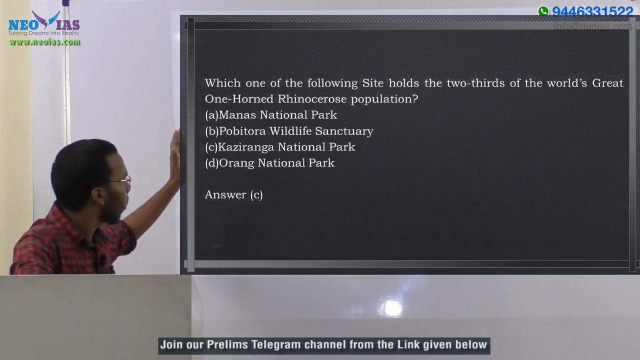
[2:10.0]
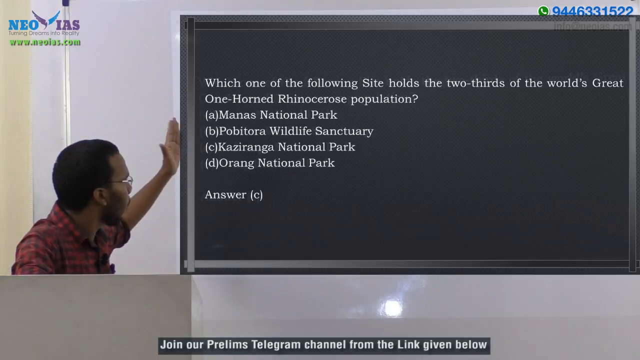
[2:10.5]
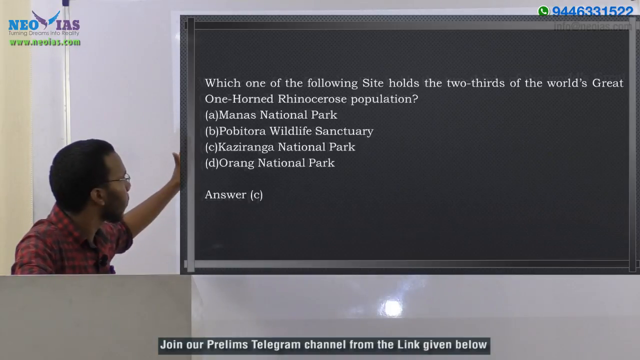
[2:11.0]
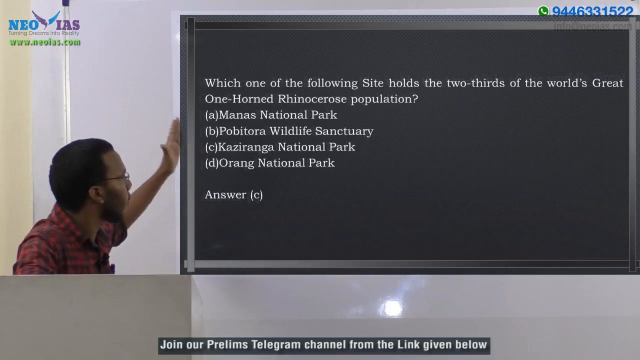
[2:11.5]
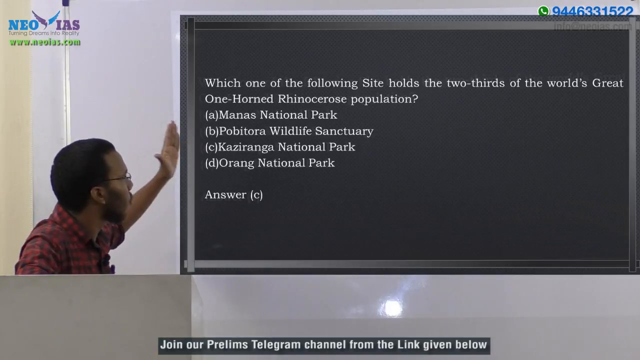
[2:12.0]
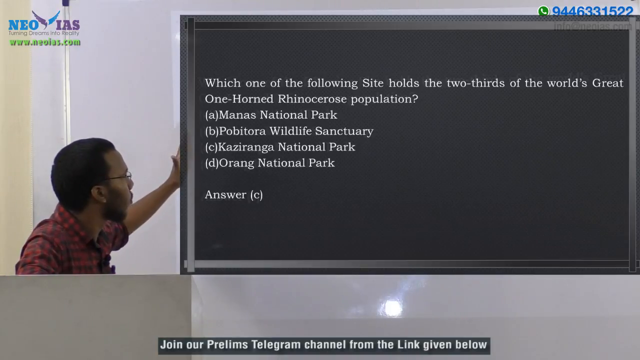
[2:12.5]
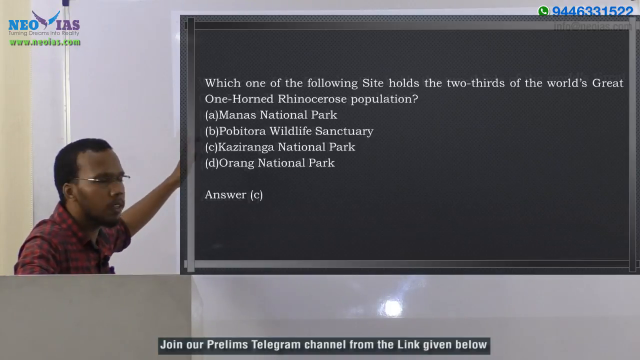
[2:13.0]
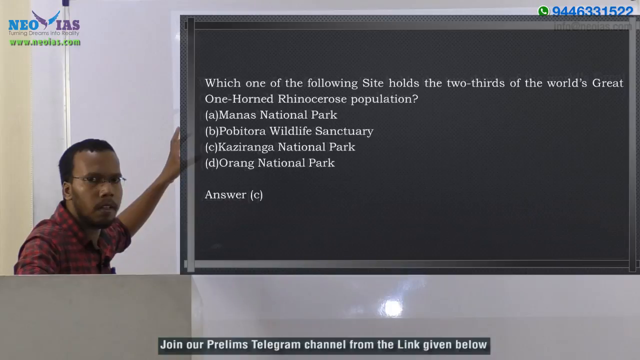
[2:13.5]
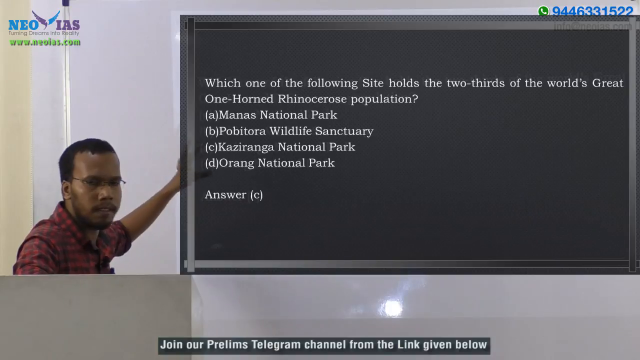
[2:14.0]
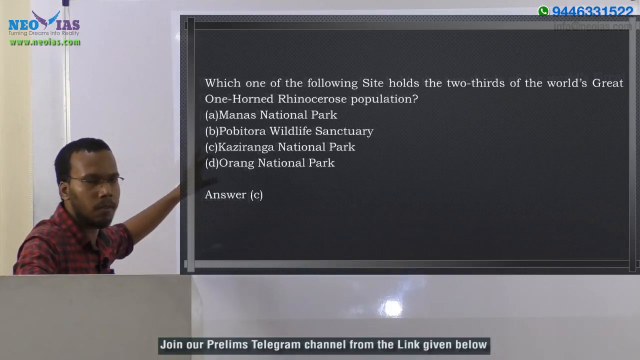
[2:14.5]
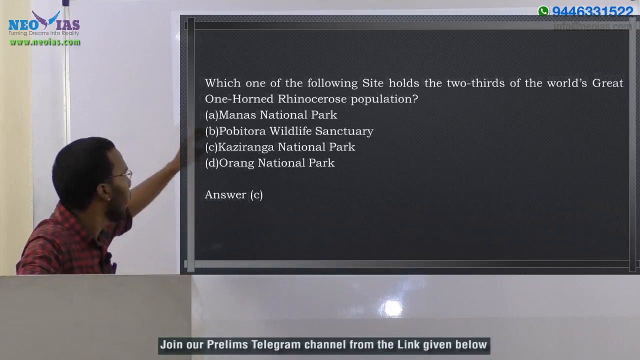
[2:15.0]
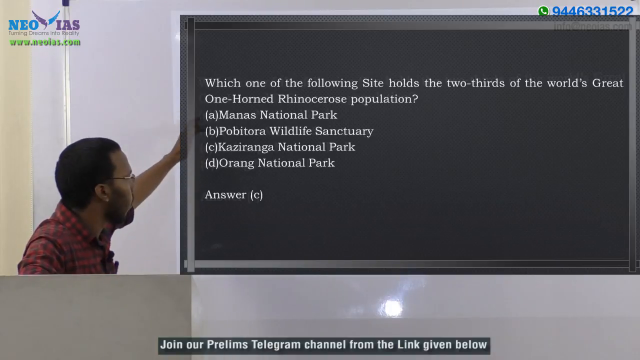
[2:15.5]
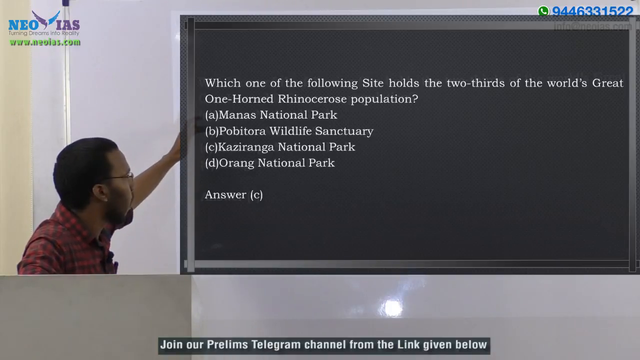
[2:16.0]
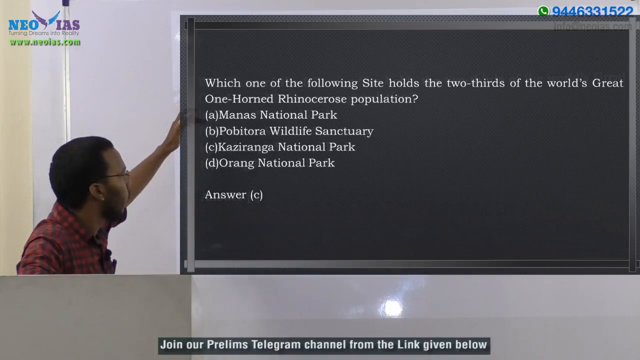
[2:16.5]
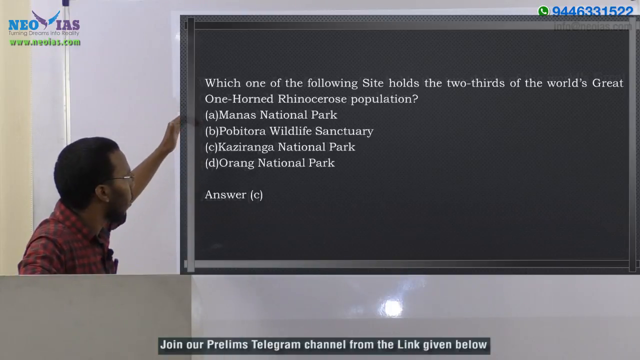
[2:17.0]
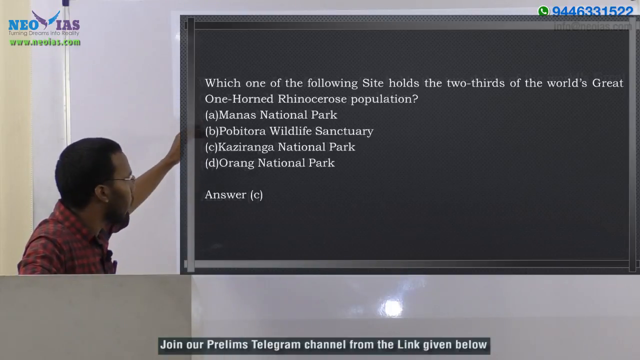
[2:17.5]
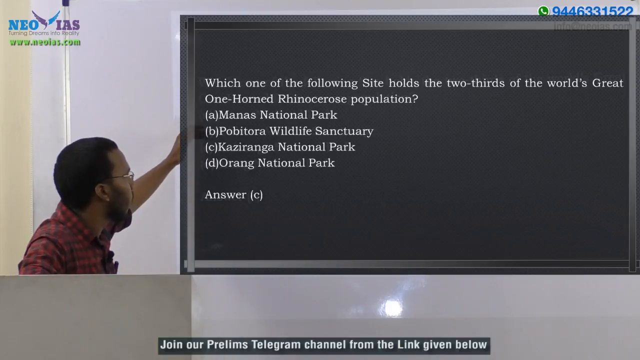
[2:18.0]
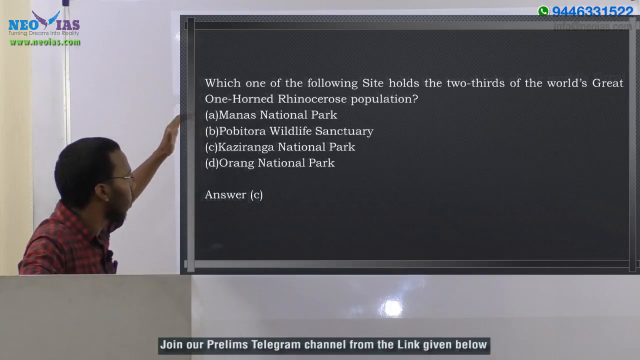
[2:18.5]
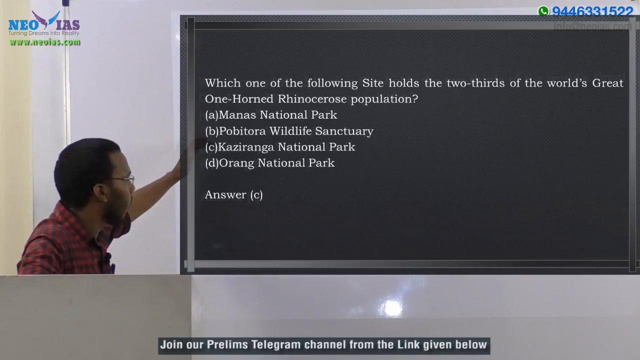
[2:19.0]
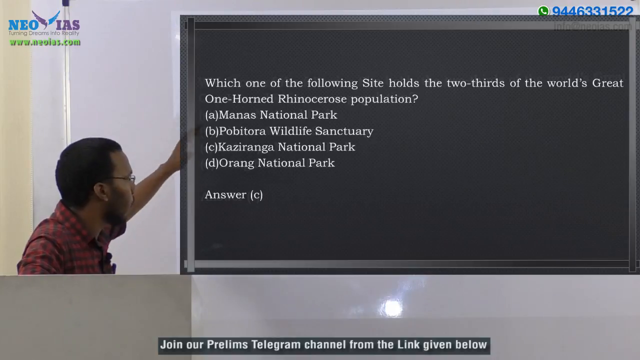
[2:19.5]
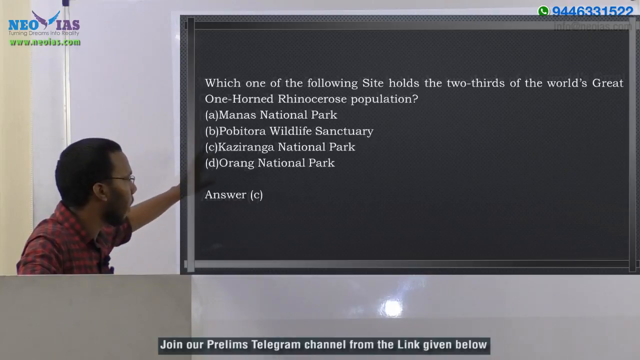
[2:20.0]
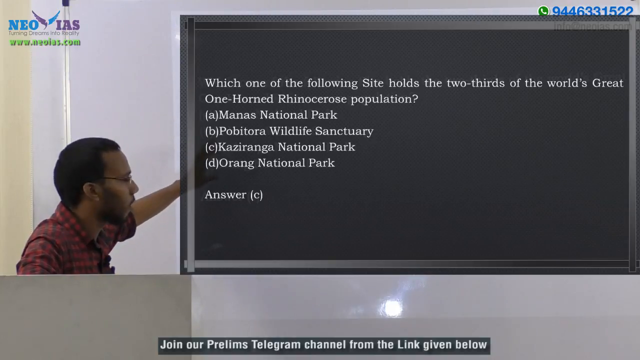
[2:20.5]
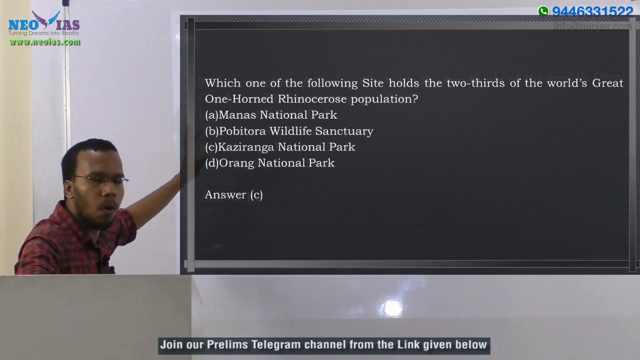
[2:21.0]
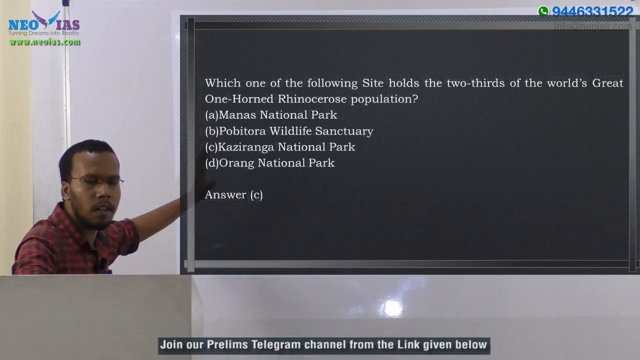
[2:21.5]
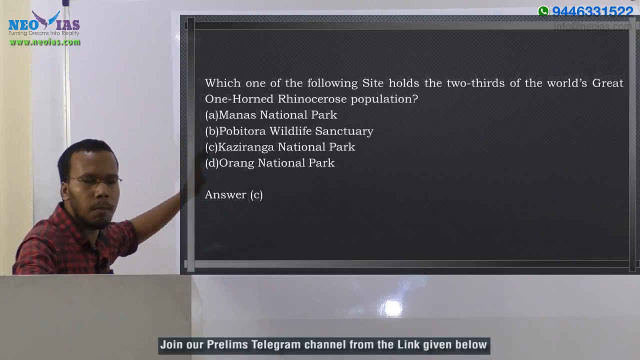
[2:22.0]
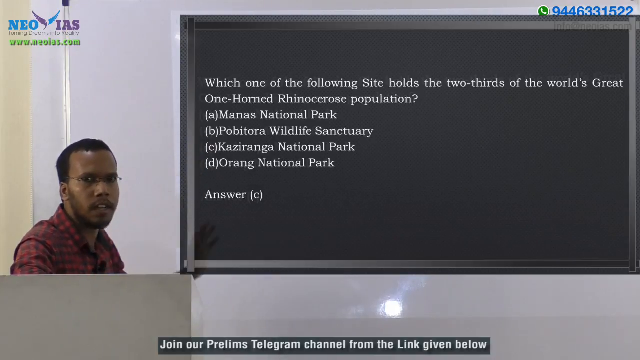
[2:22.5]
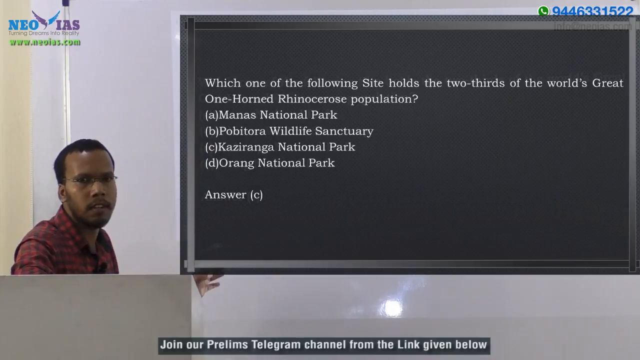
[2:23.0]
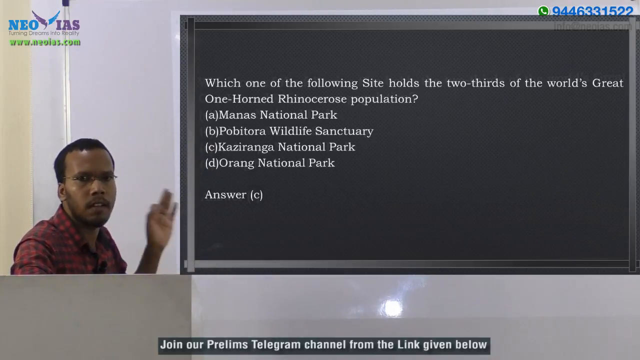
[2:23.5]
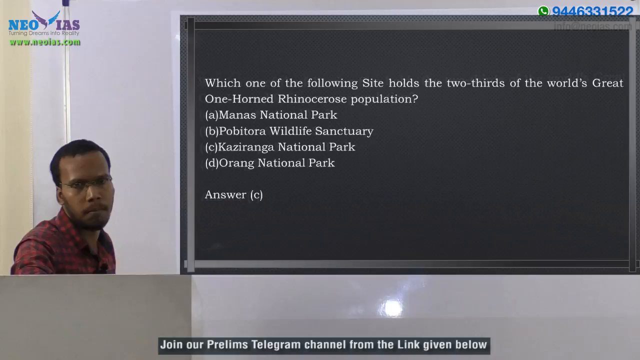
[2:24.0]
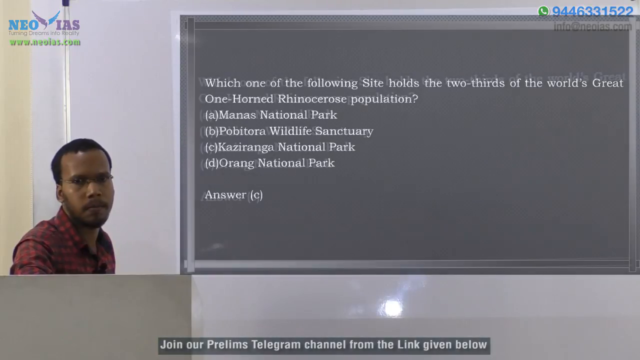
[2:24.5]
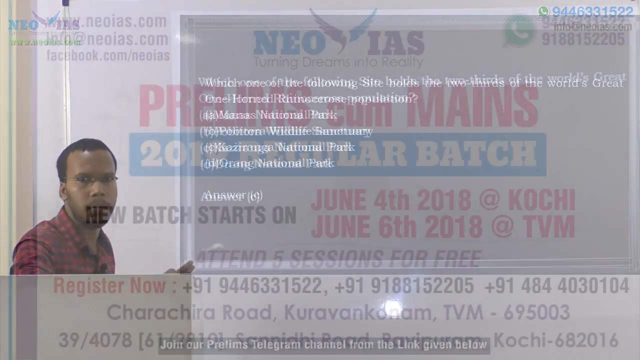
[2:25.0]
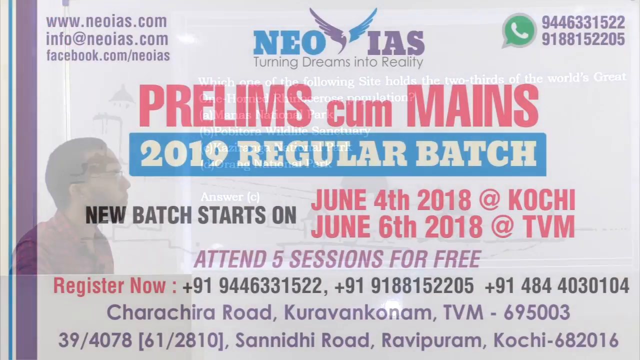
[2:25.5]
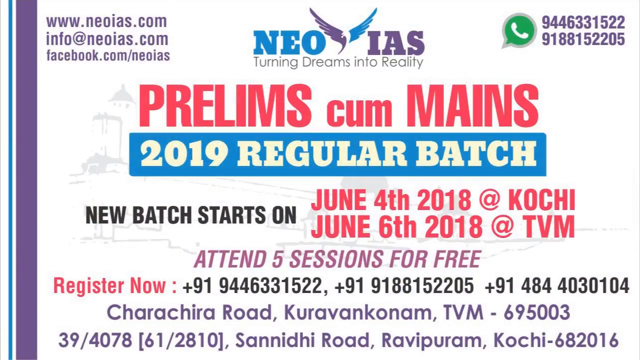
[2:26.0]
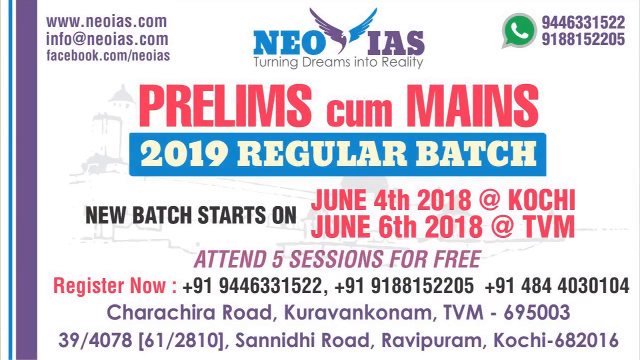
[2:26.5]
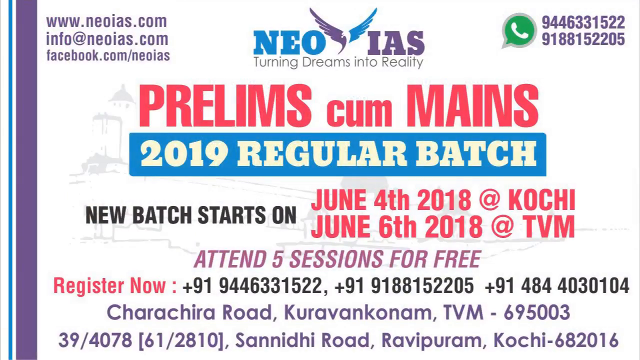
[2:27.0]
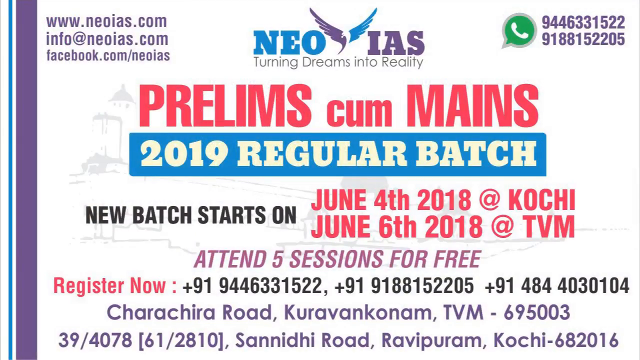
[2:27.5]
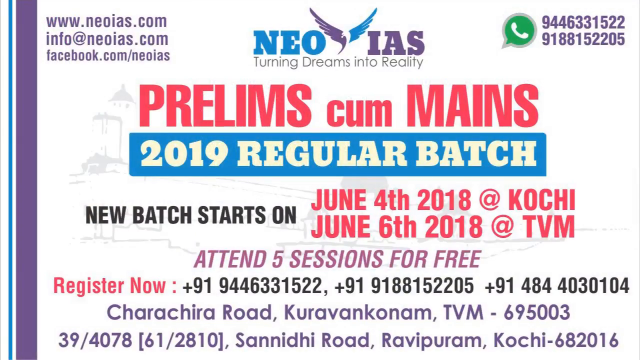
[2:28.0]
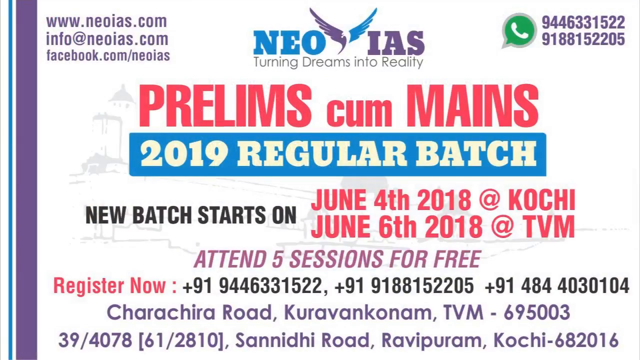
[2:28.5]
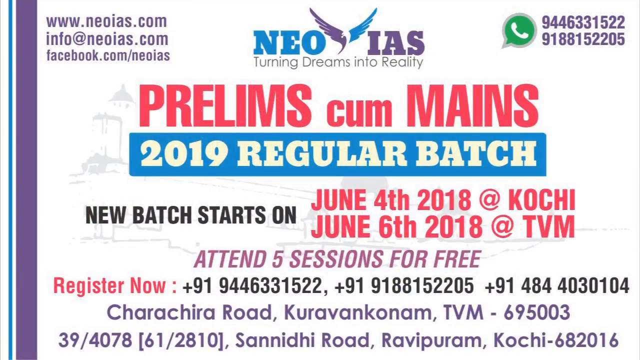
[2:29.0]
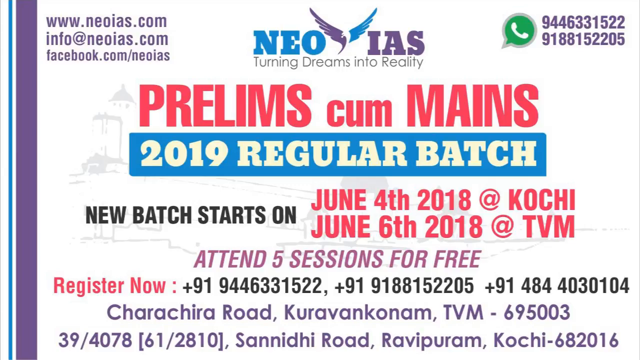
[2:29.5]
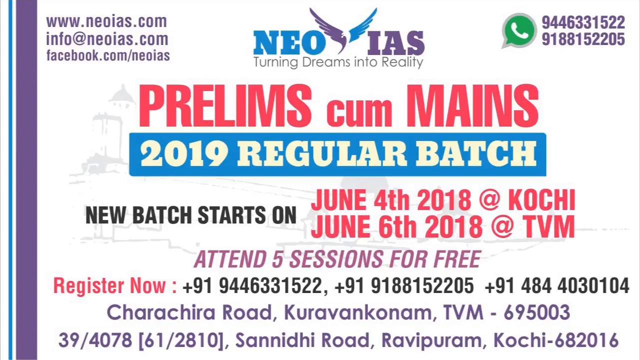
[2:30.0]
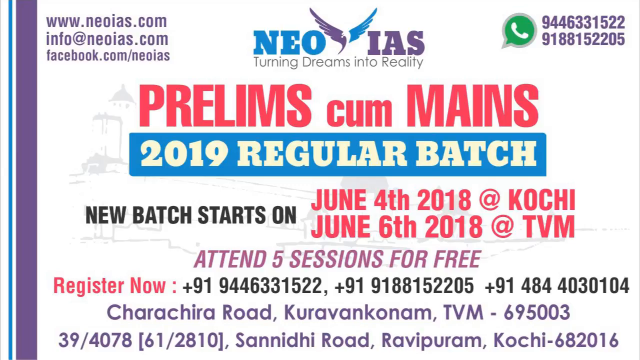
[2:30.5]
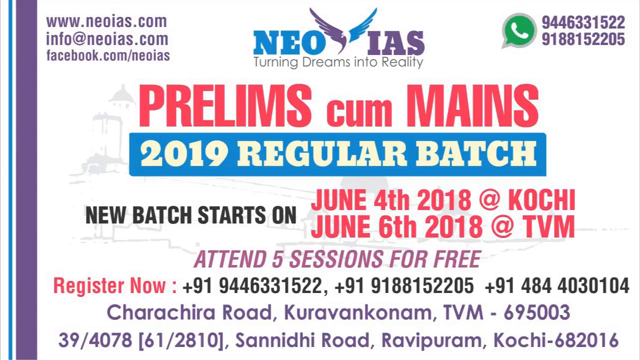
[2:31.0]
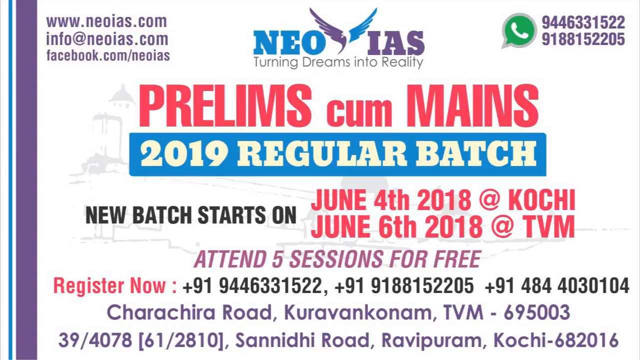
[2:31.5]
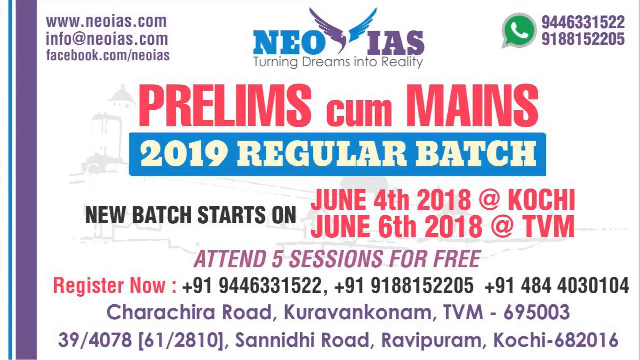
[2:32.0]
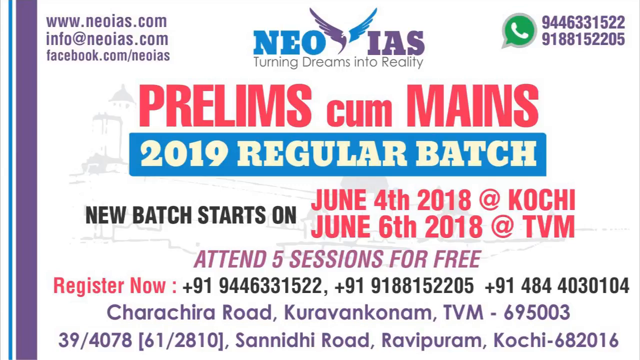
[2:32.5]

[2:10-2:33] The man talks while facing the wall, extending his hand toward it as he explains points, pointing to each point of information one by one. Only now and then does he face the camera, continuing to talk directly to the audience. He faces the camera again, explains, and moves his hand a lot. The blackboard has the same information about rhinos and similar topics, then disappears, and a pamphlet appears that covers the entire screen, no longer transparent but solid. It contains contact information and a date, including a WhatsApp number, a physical address, a website address and a Facebook page. The video ends with this pamphlet.